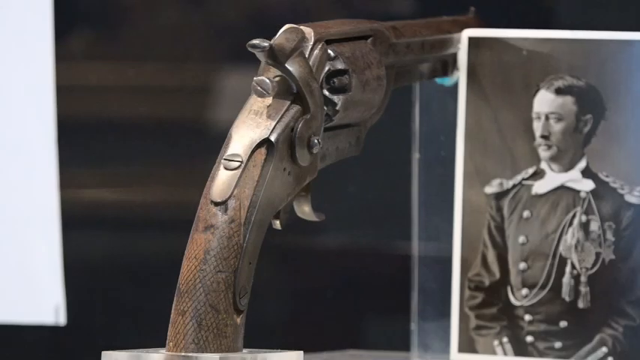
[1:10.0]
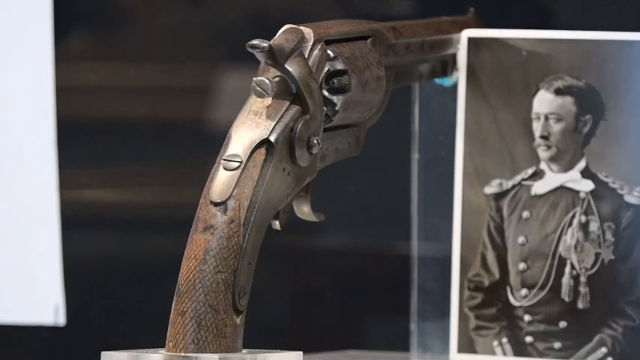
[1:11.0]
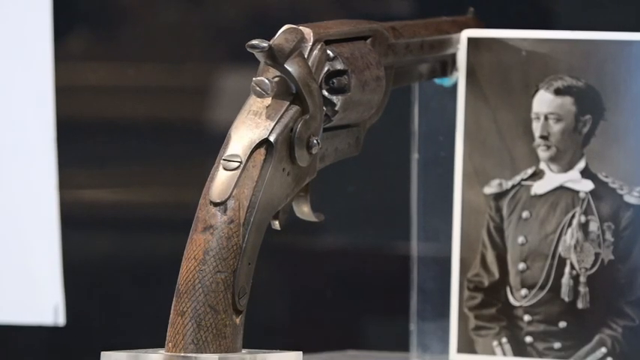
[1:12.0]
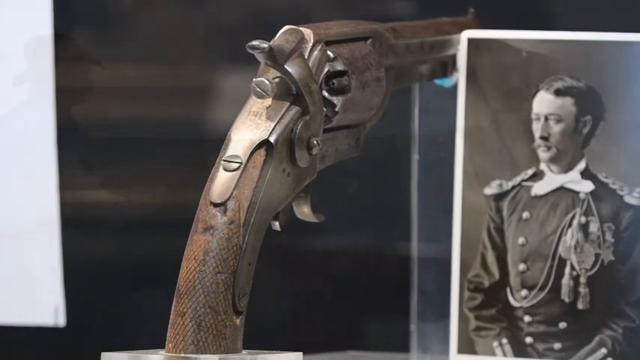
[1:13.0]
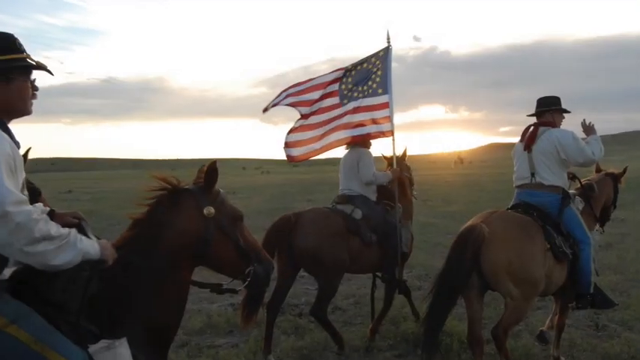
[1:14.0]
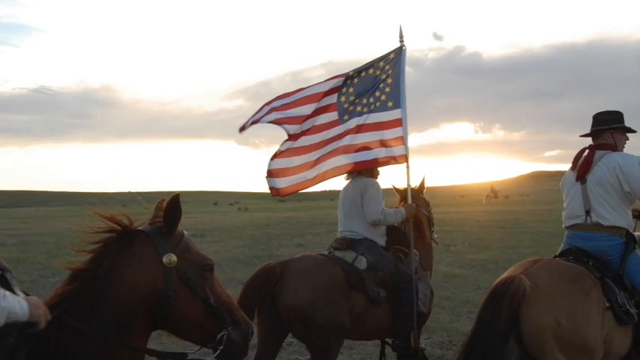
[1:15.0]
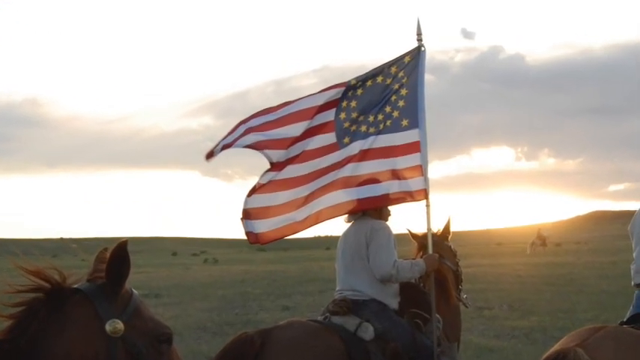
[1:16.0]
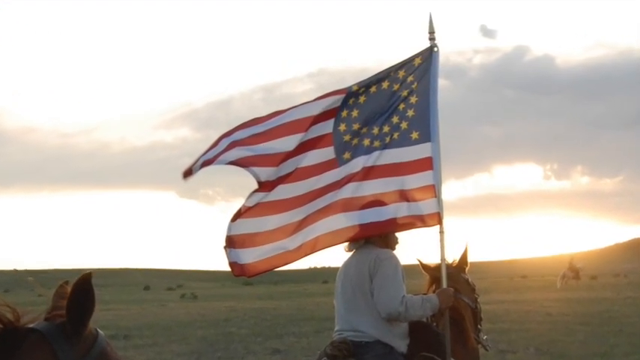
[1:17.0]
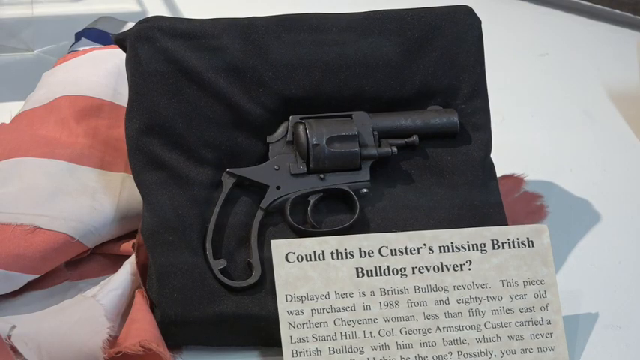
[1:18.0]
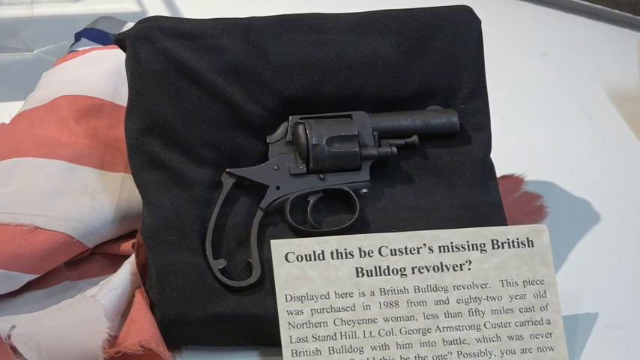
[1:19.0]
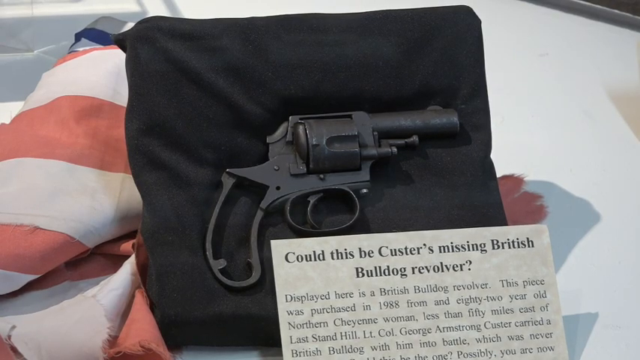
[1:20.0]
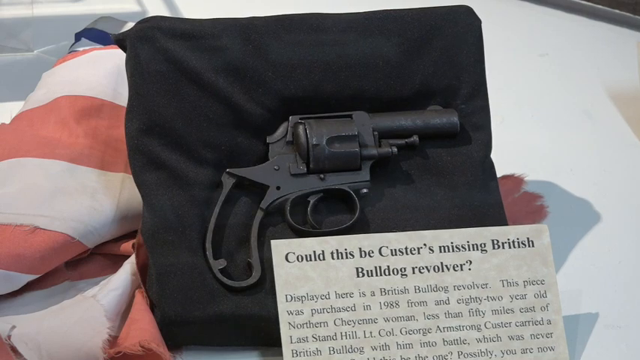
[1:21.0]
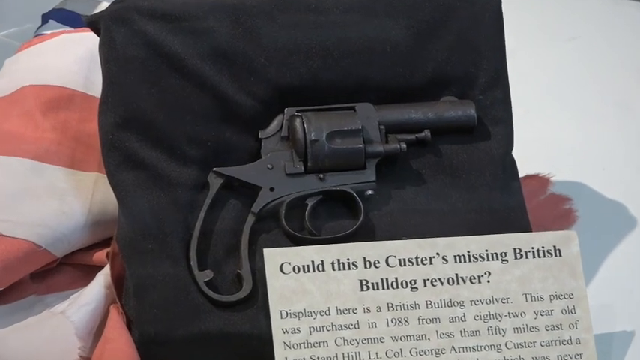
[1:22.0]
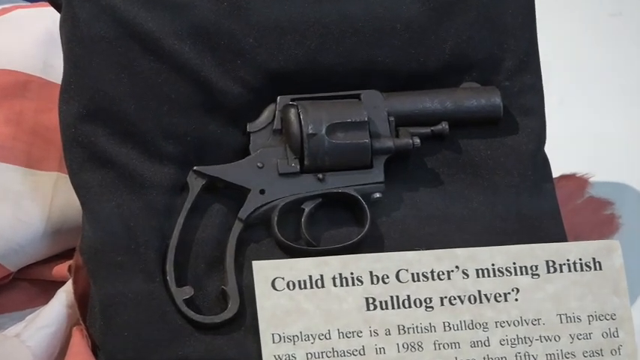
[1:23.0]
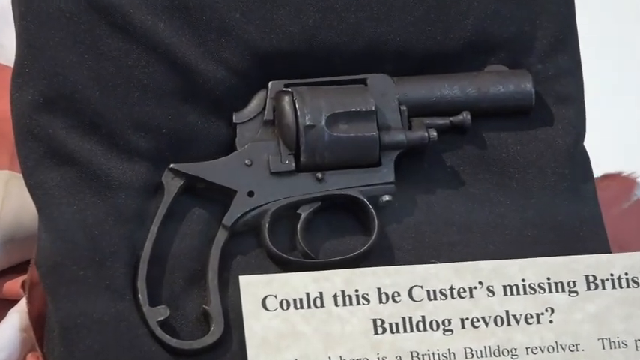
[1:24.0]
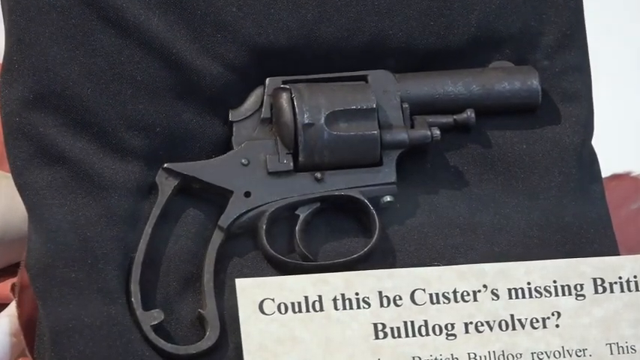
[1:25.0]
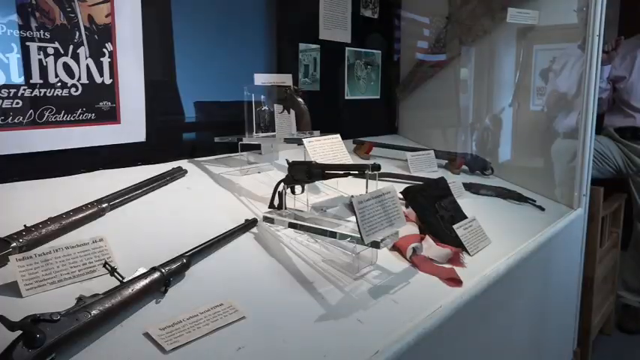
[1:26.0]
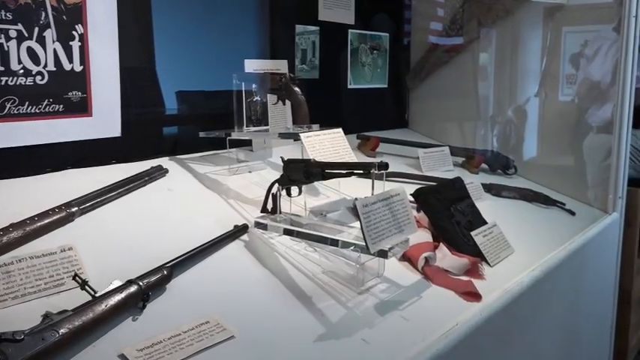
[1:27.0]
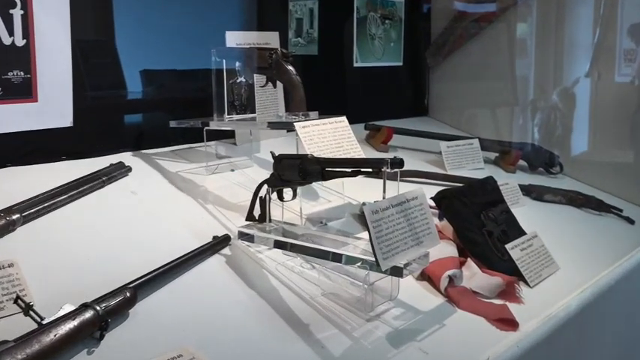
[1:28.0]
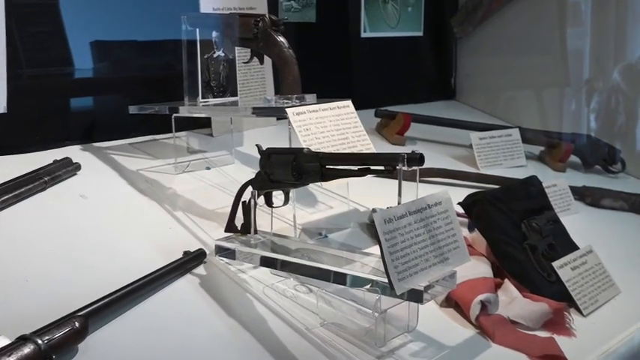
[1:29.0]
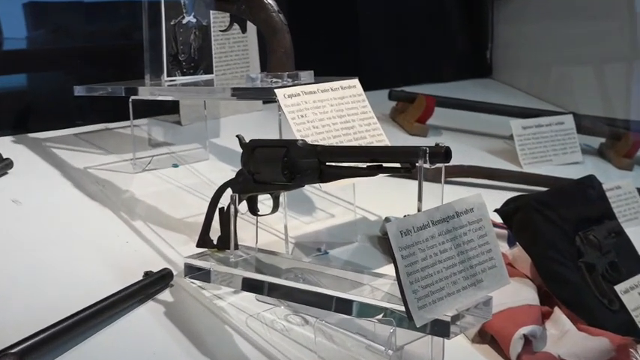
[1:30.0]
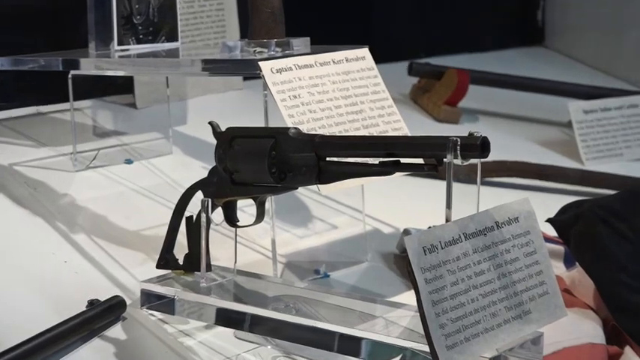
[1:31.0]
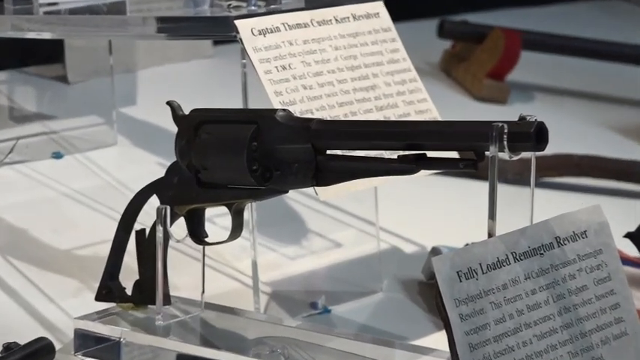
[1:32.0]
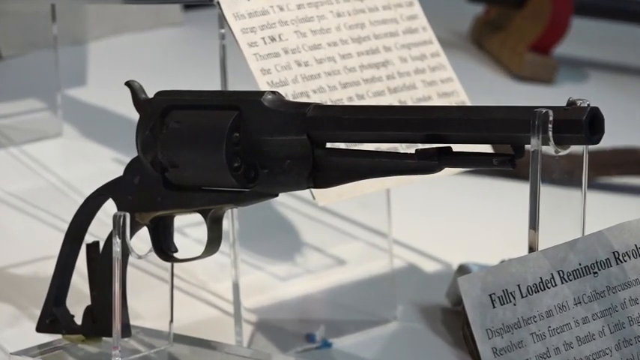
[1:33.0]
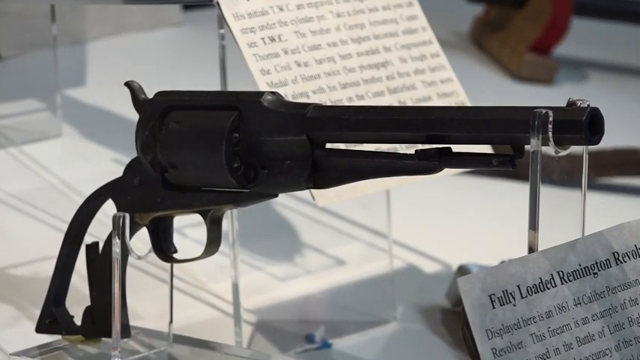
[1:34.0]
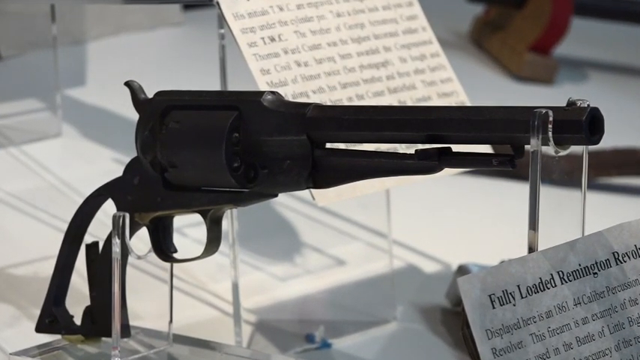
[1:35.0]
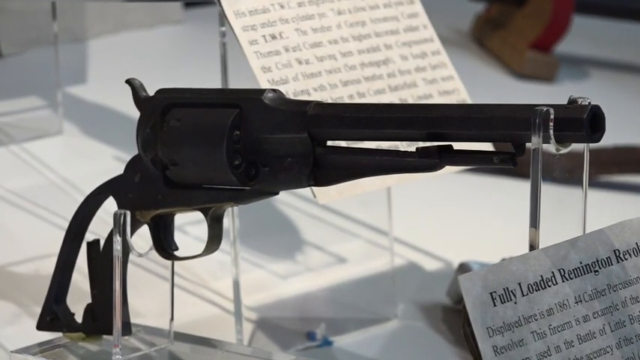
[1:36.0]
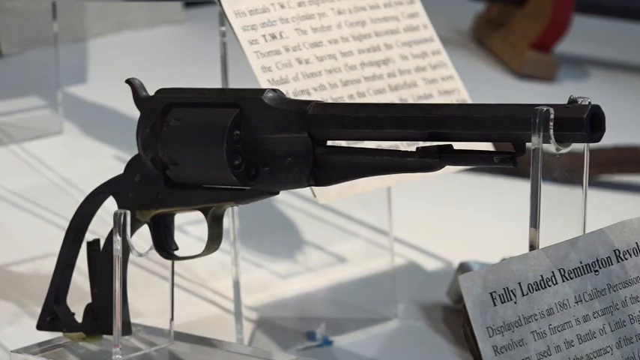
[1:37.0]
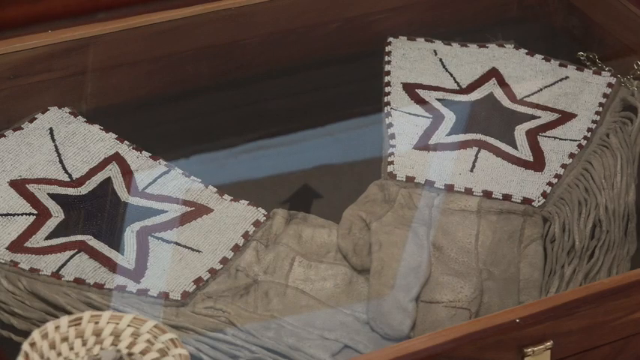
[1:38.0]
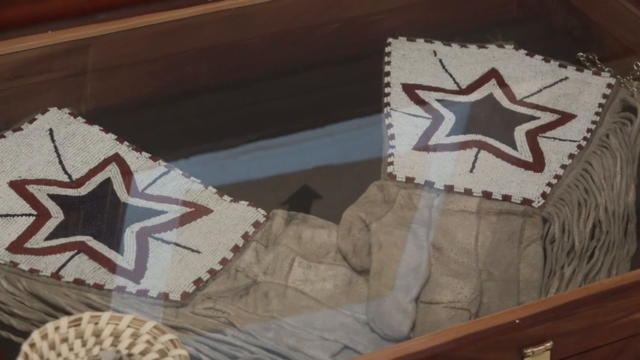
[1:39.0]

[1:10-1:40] A picture of a handgun appears next to a picture frame of a man dressed in soldier attire. Then a picture shows people riding on a horse while a person holds up a flag that looks to be of the colonial army of the U.S. Next is a picture of a black handgun, with text underneath reading "could this be Custer's missing British Bulldog revolver displayed here as a British Bulldog revolver. This piece was purchased in 1988 from an 82-year-old Northern Cheyenne woman less than 50 miles east of Last Stand Hill." The view then zooms into a glass display of several different handguns with messages on them displaying their history.